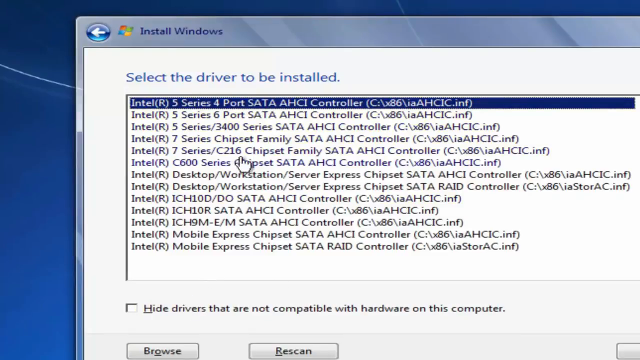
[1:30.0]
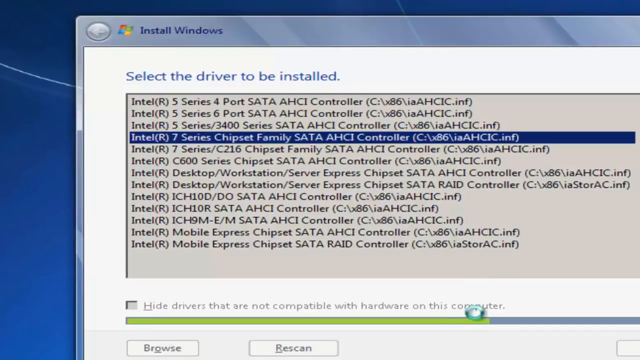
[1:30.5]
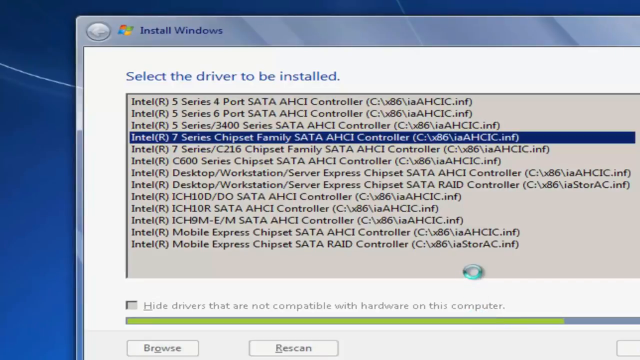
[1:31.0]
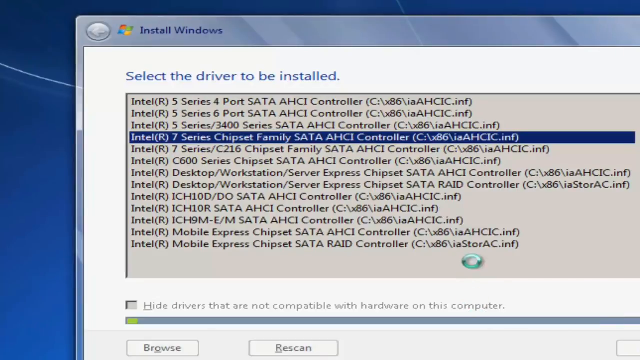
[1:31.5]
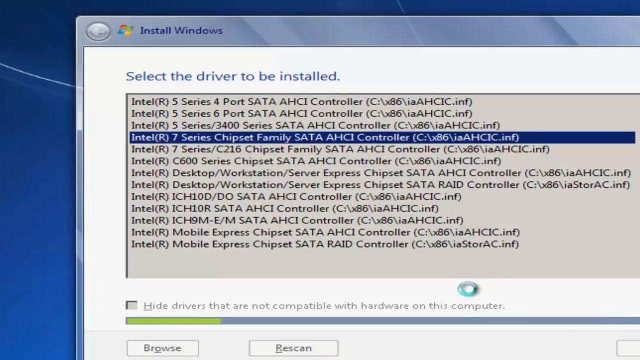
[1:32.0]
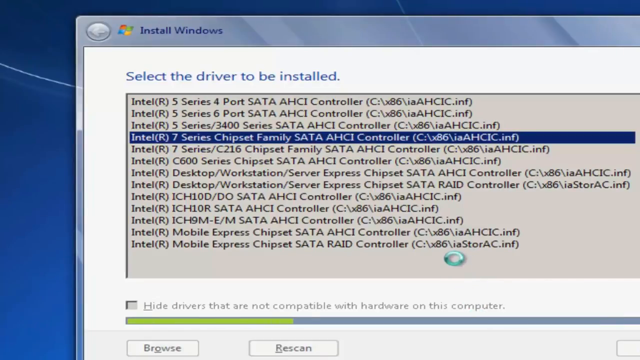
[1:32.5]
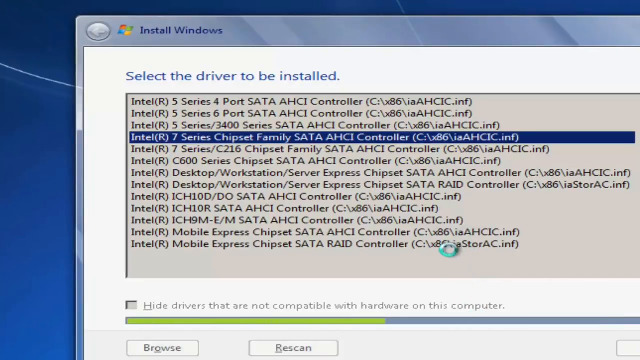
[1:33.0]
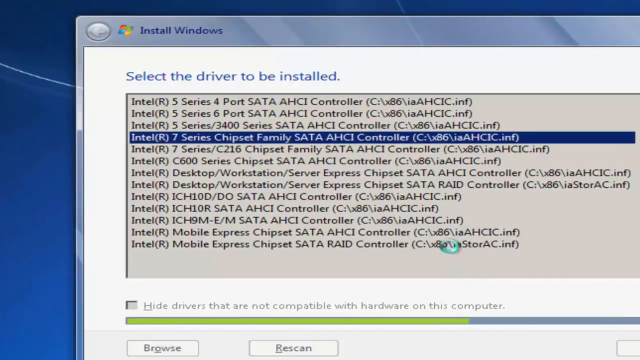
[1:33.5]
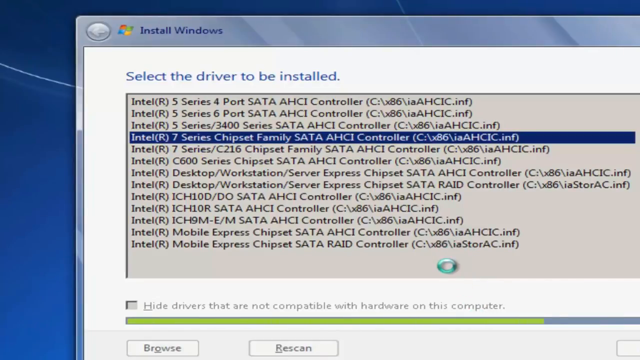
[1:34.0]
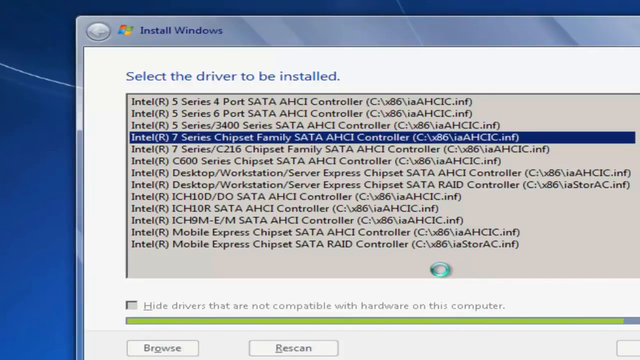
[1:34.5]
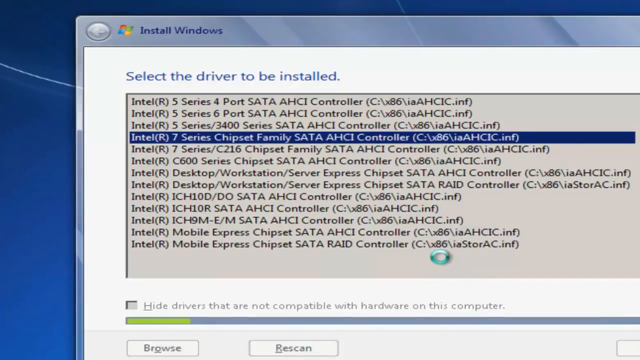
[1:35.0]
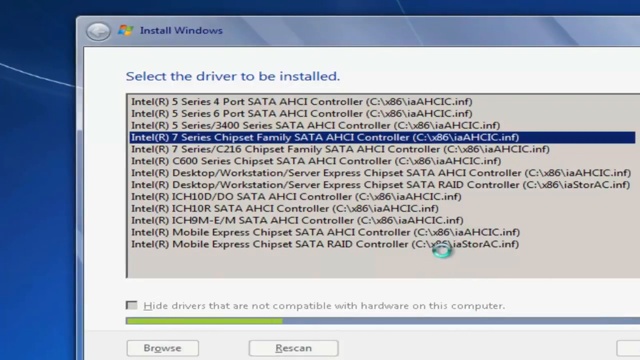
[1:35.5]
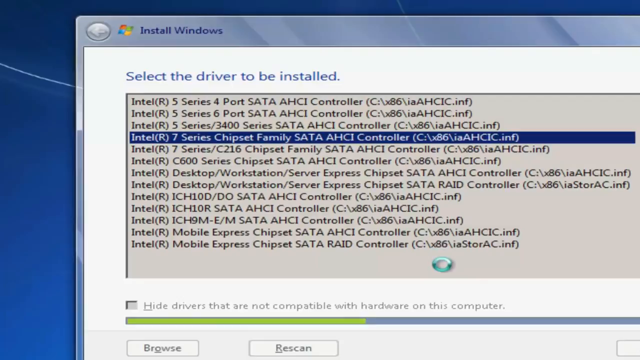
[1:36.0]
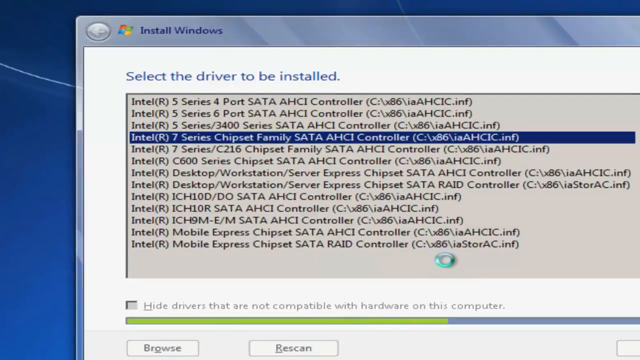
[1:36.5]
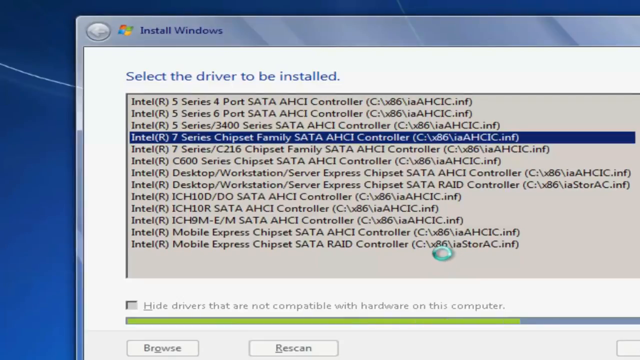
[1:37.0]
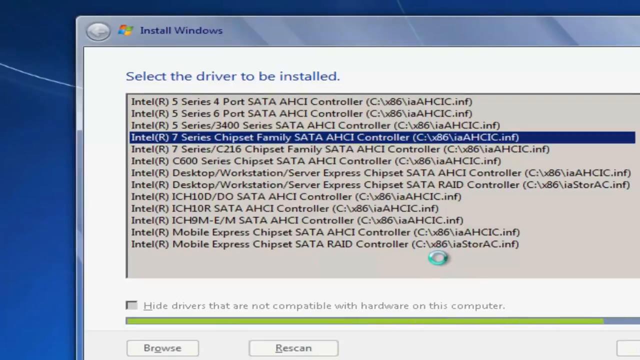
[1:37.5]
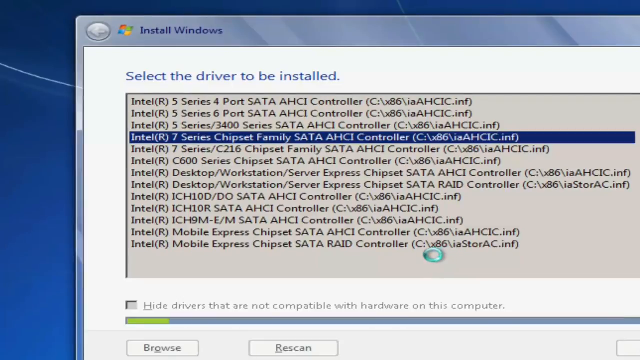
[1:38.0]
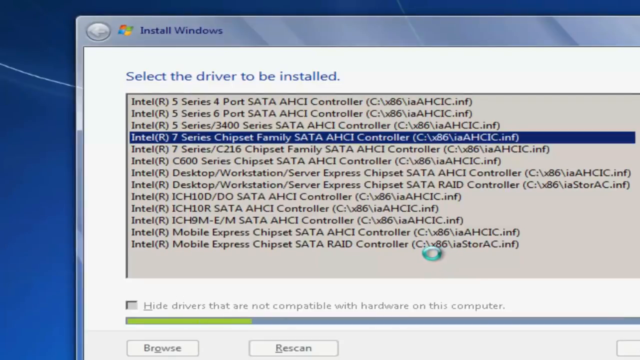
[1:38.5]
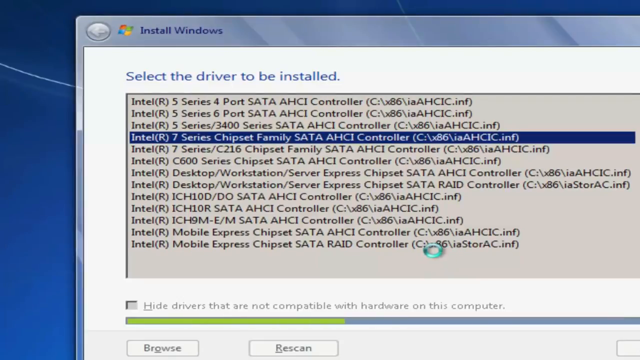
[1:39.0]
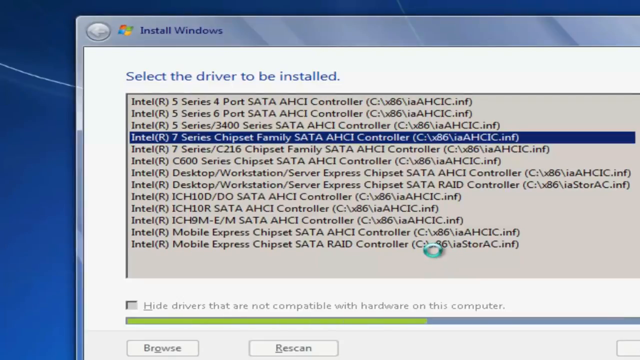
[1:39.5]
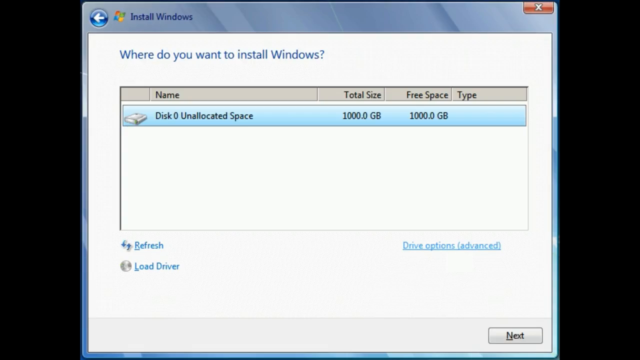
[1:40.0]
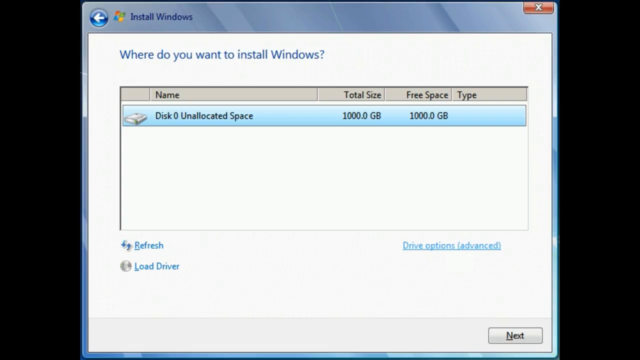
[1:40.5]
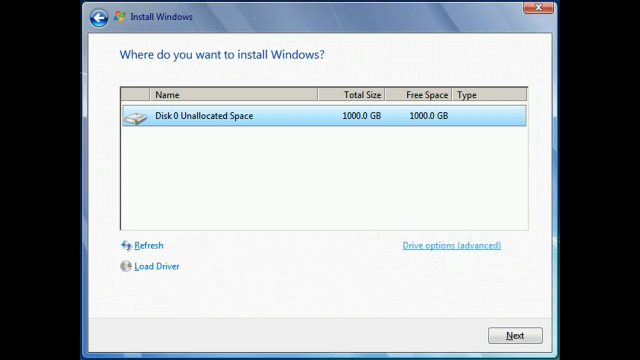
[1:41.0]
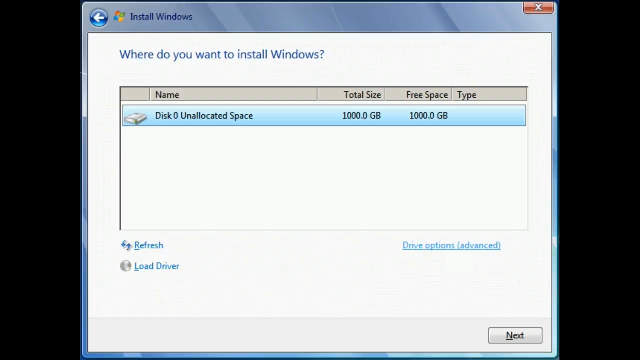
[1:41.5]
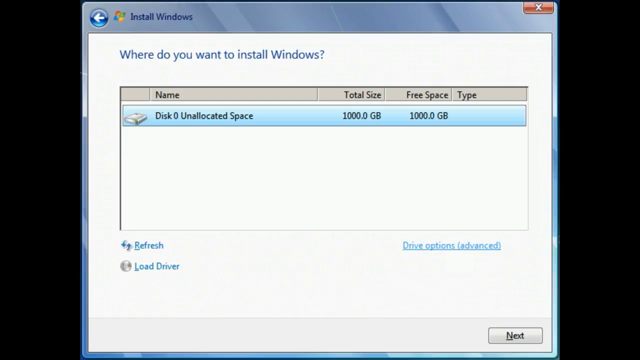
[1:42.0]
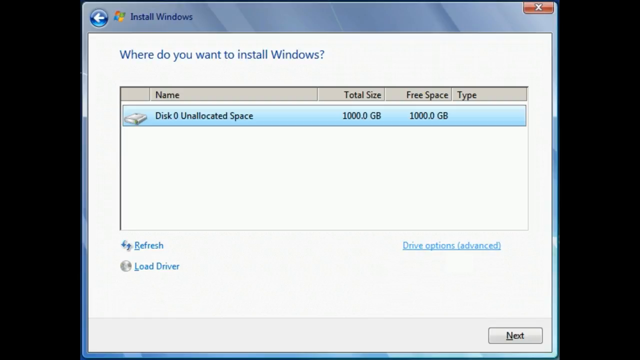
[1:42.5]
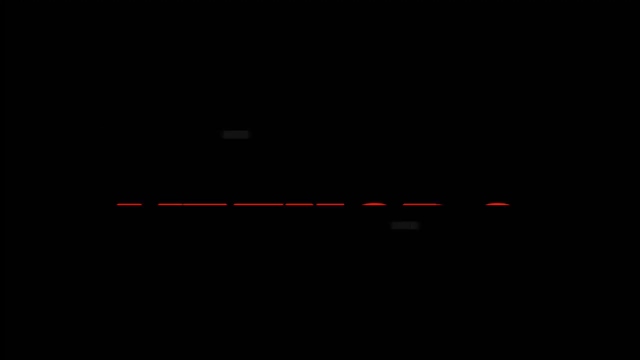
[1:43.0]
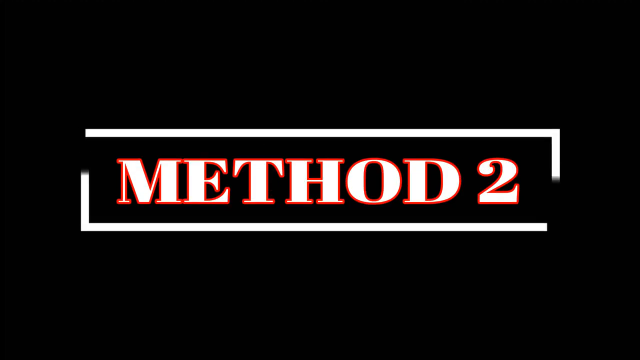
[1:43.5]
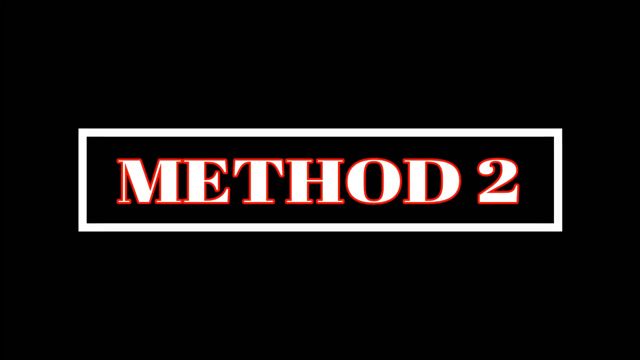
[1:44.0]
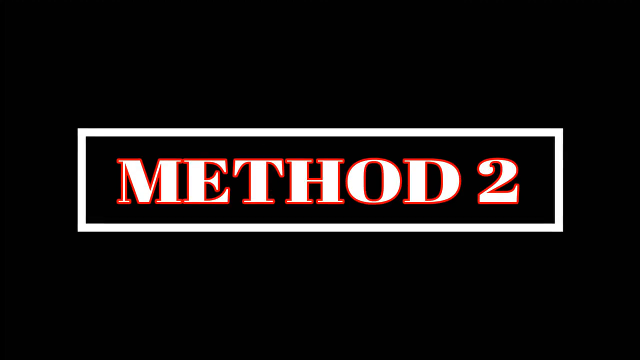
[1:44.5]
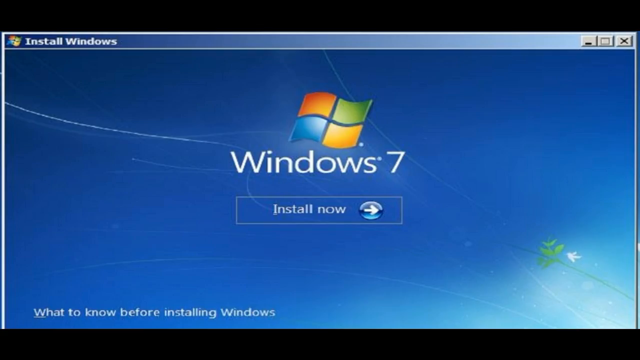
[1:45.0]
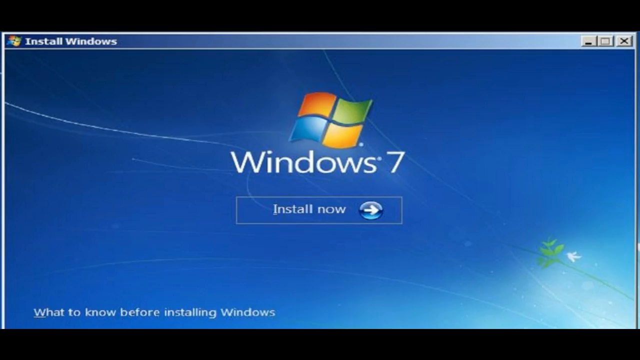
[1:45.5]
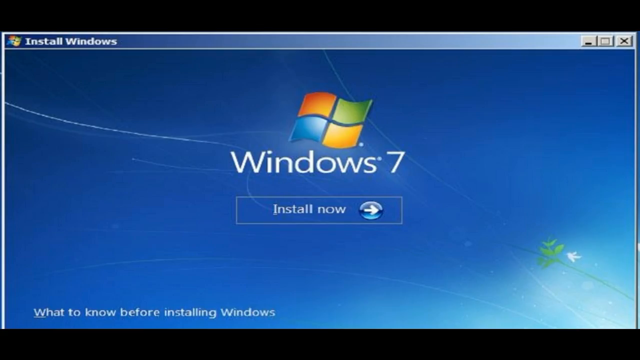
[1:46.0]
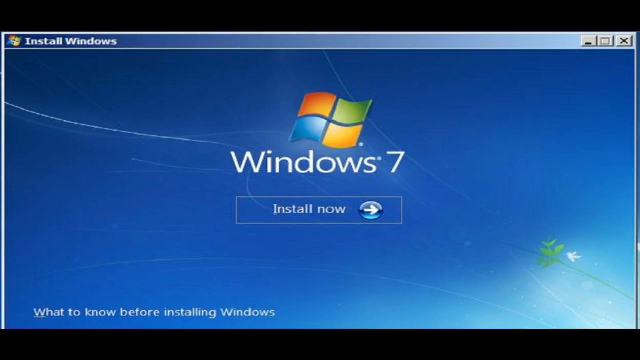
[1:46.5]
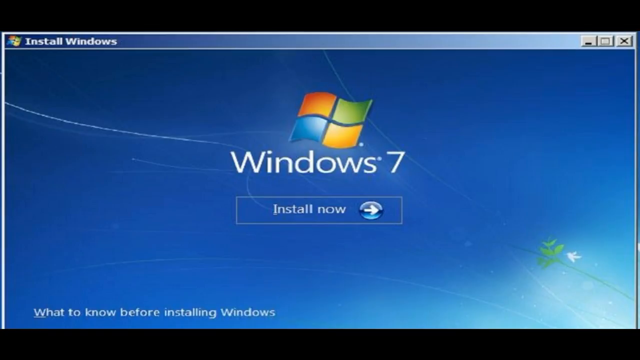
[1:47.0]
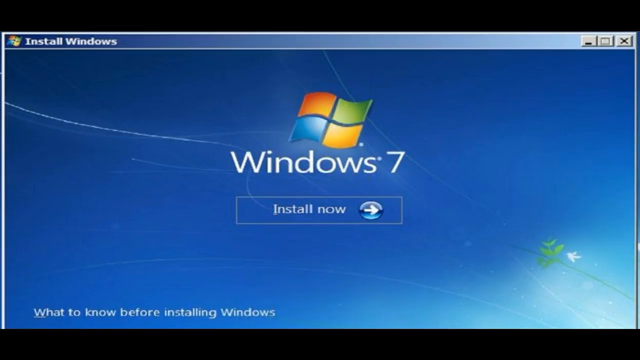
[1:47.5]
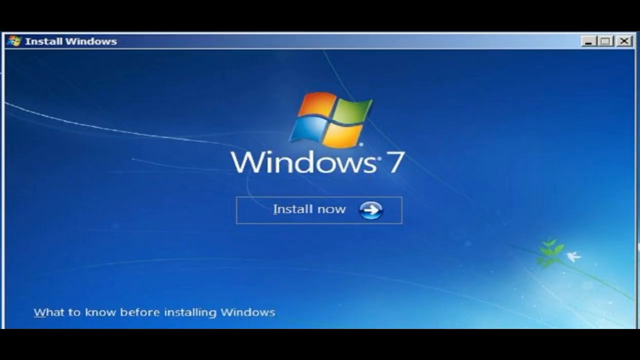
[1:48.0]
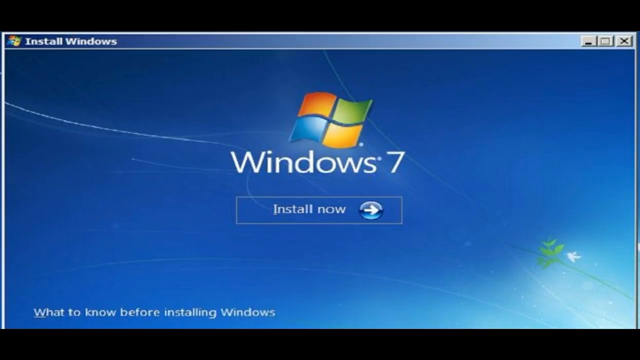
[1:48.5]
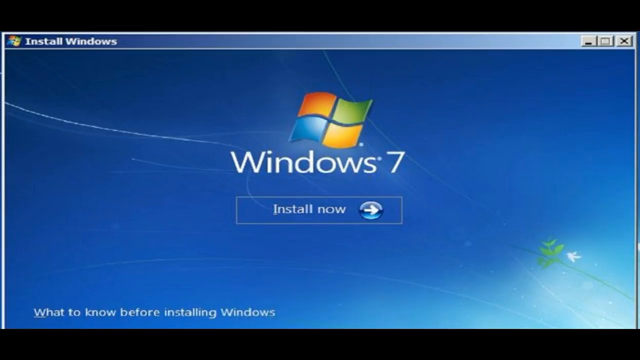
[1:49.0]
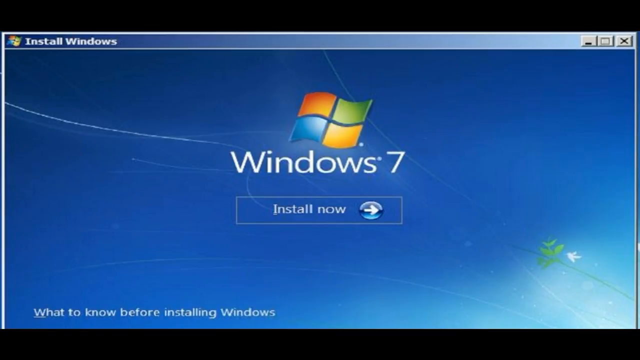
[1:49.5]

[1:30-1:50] A video screen grab from a computer shows the Install Windows prompt, where the user is selecting a driver to be installed. The cursor has turned into a donut ring shape that circles as though loading something. A green progress bar at the bottom slowly fills up, changing from grey to green, repeating over and over while the donut cursor spins. The screen then changes to a screenshot, also of the Install Windows prompt, with a single highlighted box of data showing disk zero unallocated space, the location where they want to install Windows. The screen then transitions to a black background with a white box in the centre containing the text "method two". Next comes a different screenshot from a Windows computer: another Install Windows prompt, this one for Windows 7, with a button in the centre that says "install now".